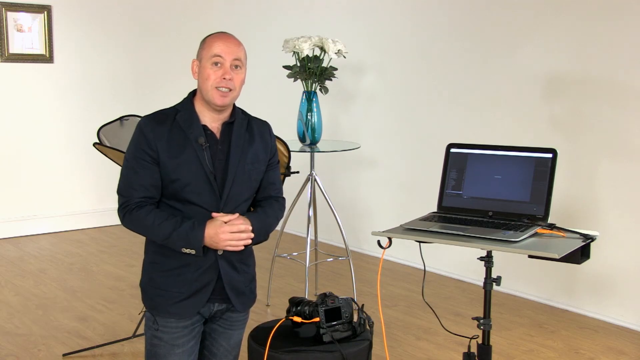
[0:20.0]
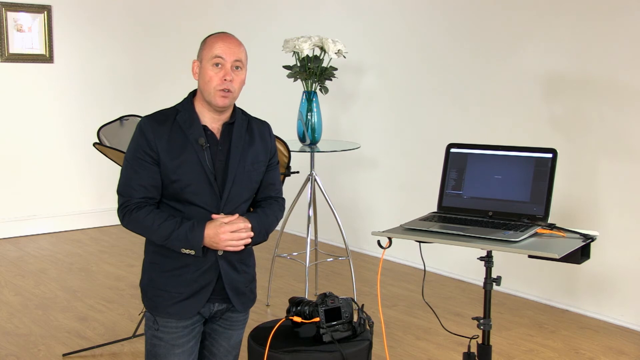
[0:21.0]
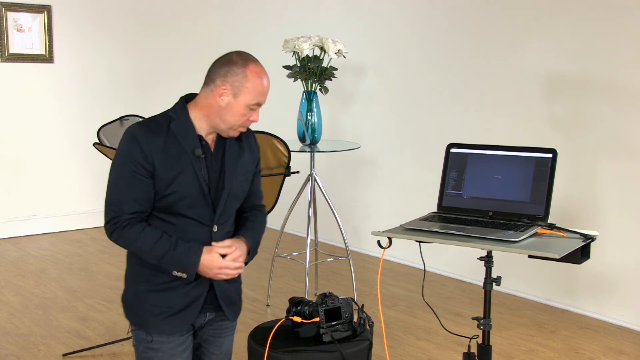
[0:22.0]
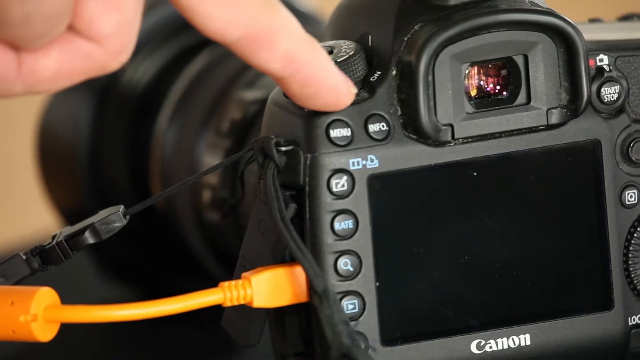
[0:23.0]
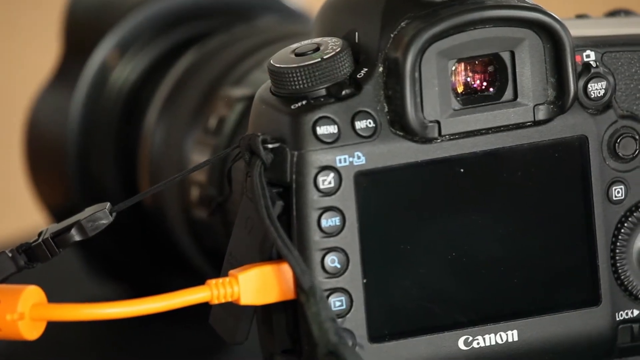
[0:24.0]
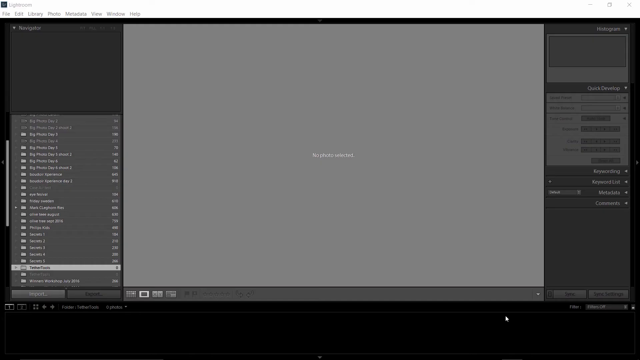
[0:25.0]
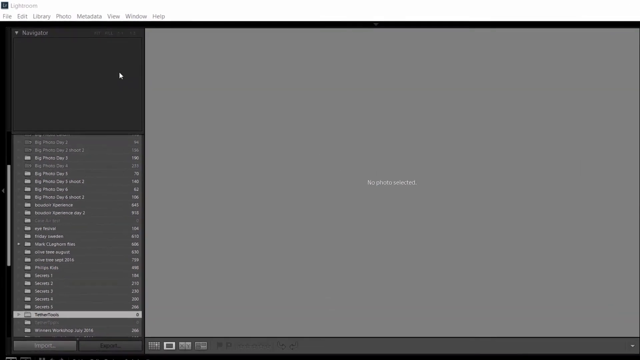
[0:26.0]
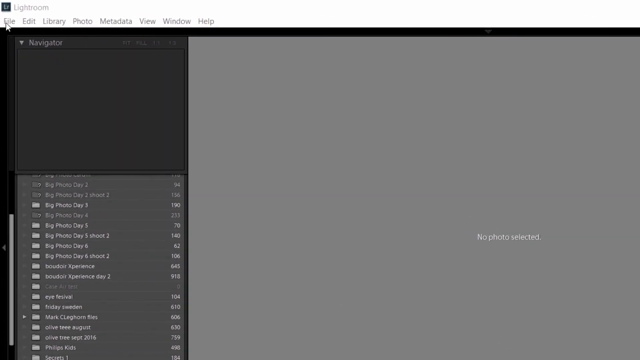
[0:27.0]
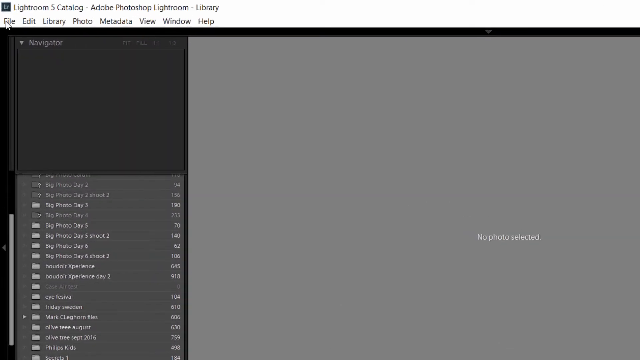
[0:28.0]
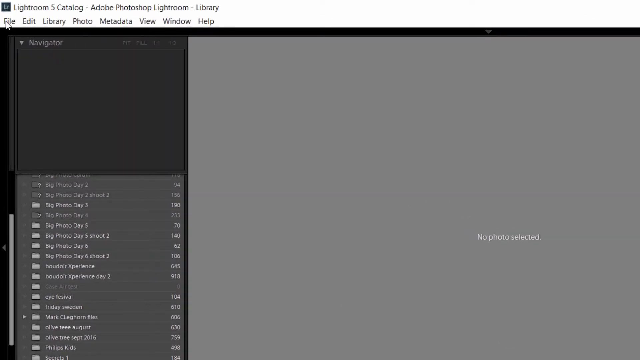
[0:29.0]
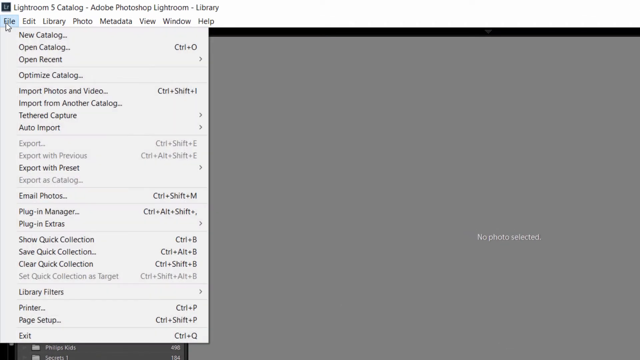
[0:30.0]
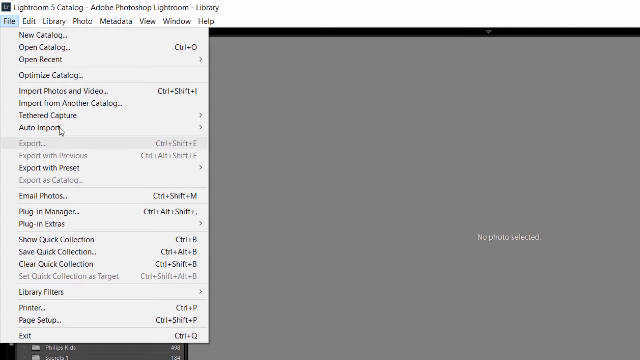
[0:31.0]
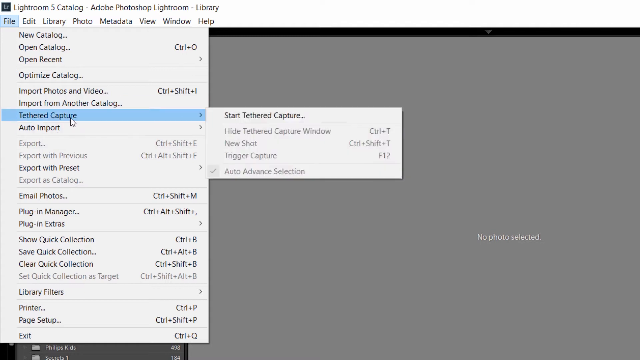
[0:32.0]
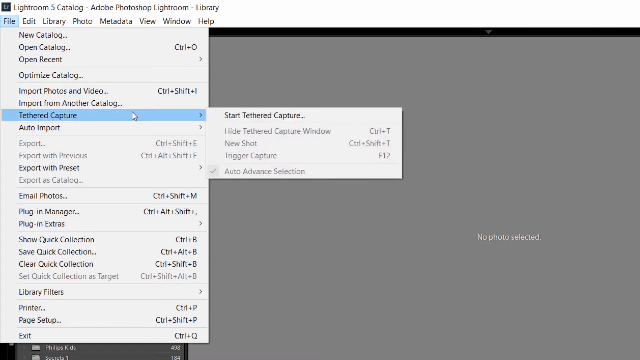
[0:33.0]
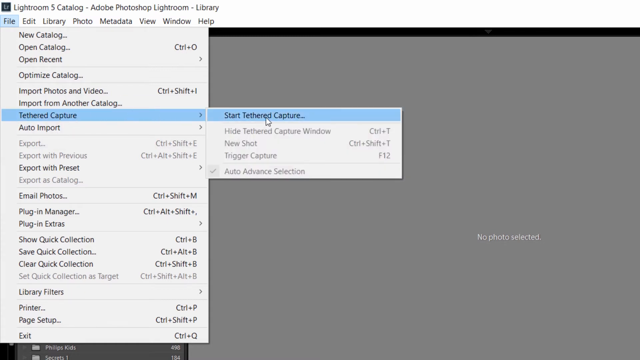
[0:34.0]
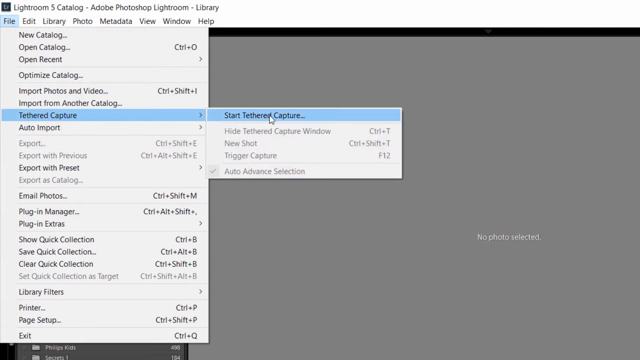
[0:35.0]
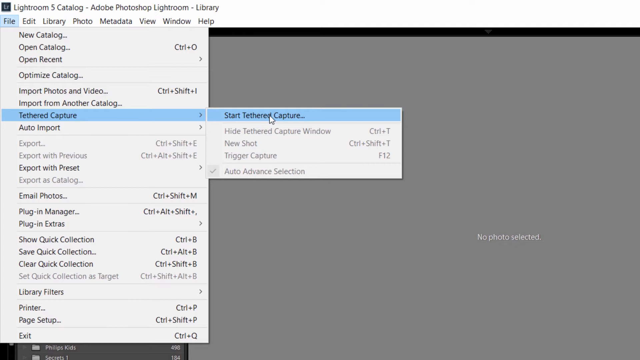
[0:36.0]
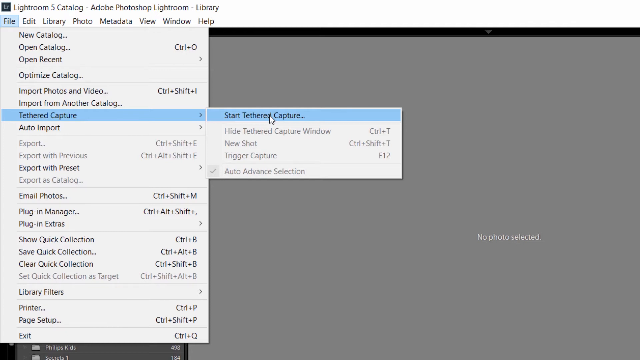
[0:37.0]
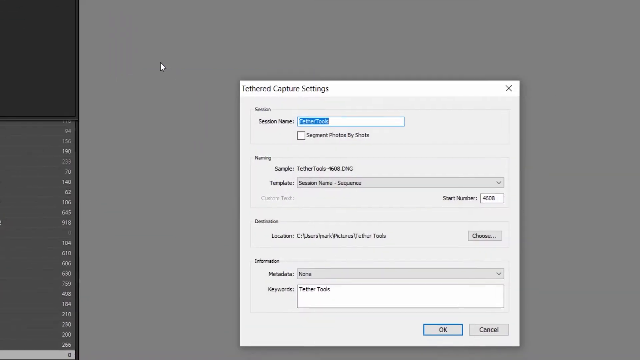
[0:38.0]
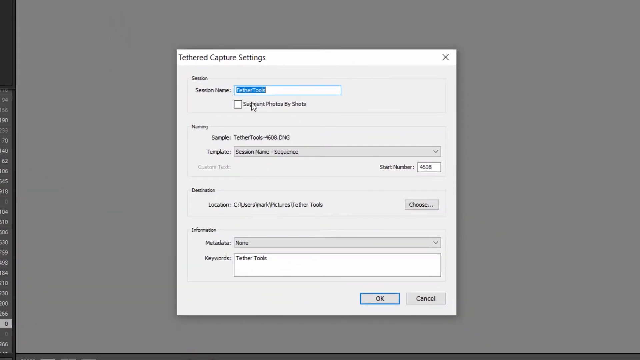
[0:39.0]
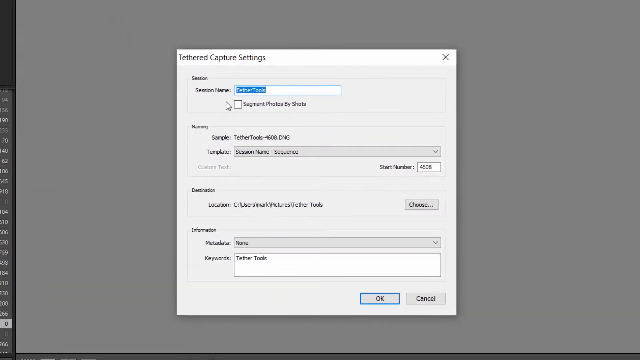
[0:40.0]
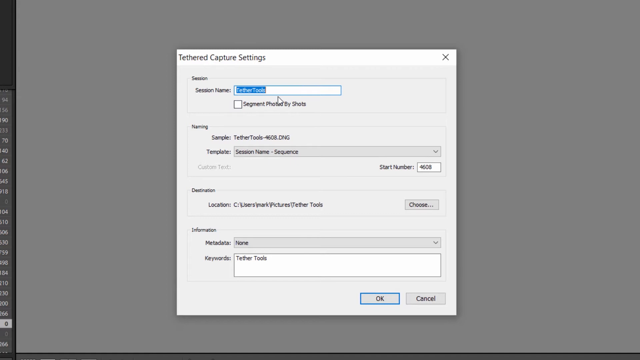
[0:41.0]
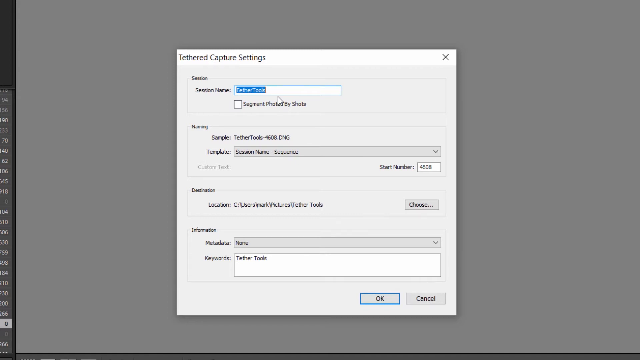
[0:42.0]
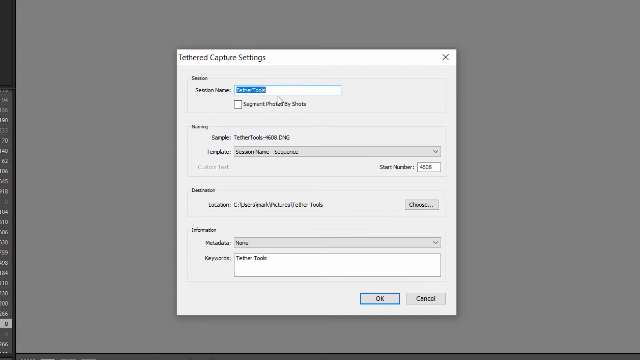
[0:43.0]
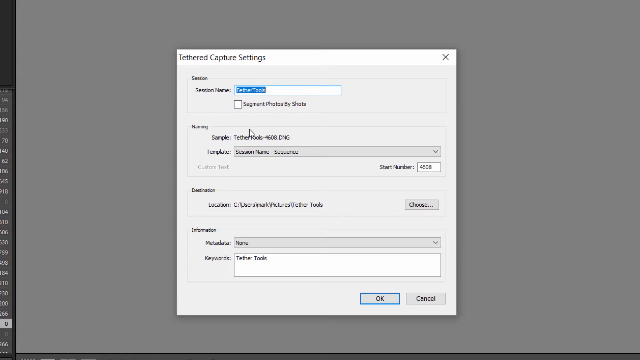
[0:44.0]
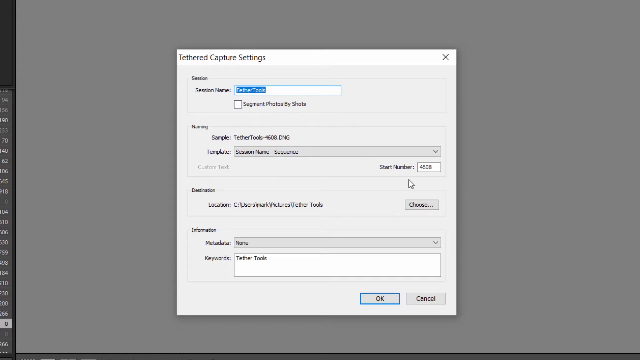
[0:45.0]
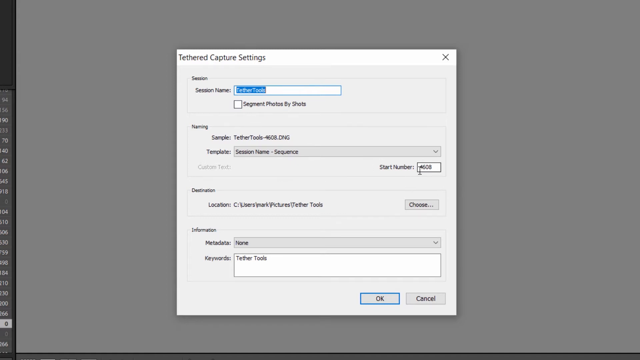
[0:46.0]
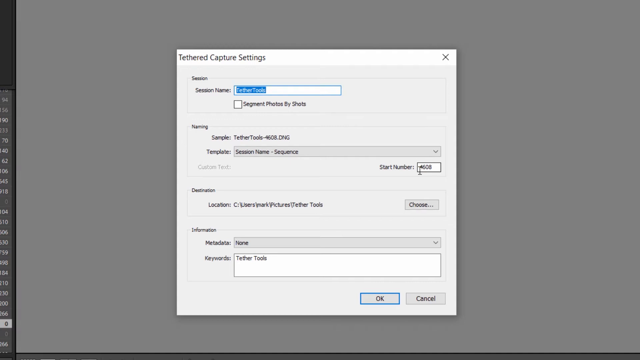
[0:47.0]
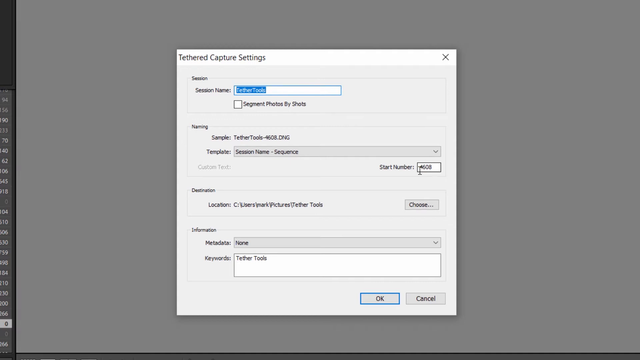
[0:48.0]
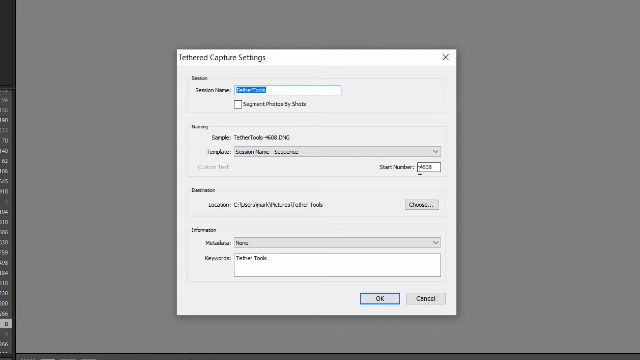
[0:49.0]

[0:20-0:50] The man speaks with his fingers interlaced, his right hand on top of his left so the left hand is hidden. He wears a buttoned-up dark navy or black blazer over a black polo shirt, and dark denim jeans. He stands next to a small table with a camera on it, and the camera zooms in so the camera on the table is visible. A screen recording of a computer follows, showing Lightroom; the top left corner reads "Lightroom 5 catalogue, Adobe Photoshop Lightroom library". He clicks on File and scrolls down to Tethered Capture, which opens a dropdown to the right, and he clicks "start tethered capture". A new window called "Tether Capture Settings" comes up, with "Tether Tools" in the session name.